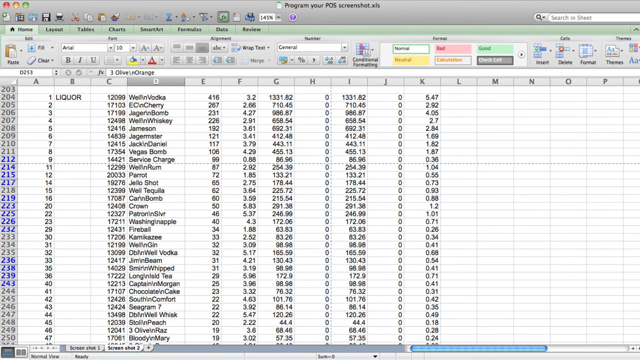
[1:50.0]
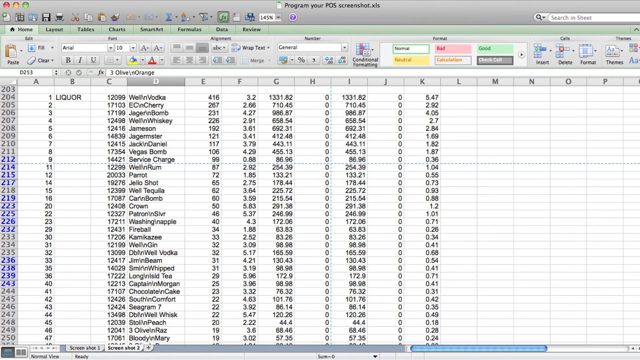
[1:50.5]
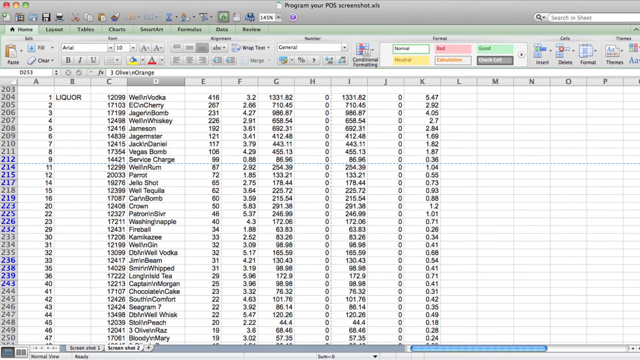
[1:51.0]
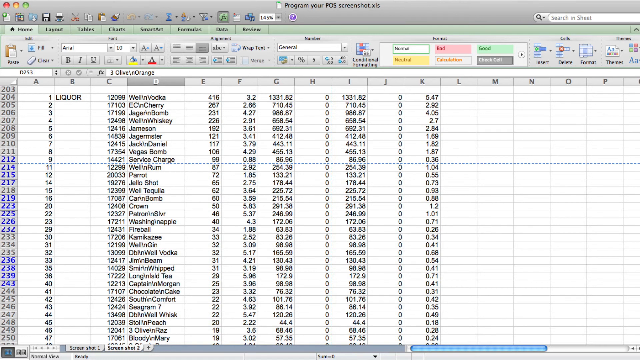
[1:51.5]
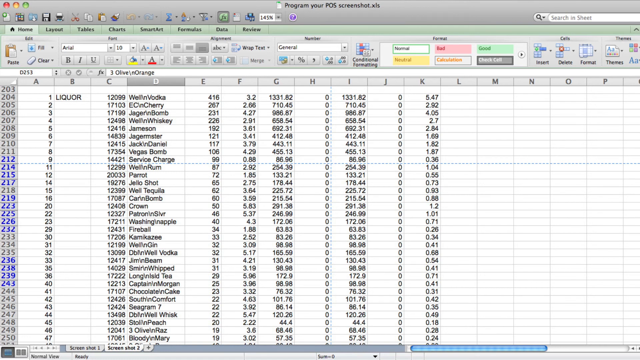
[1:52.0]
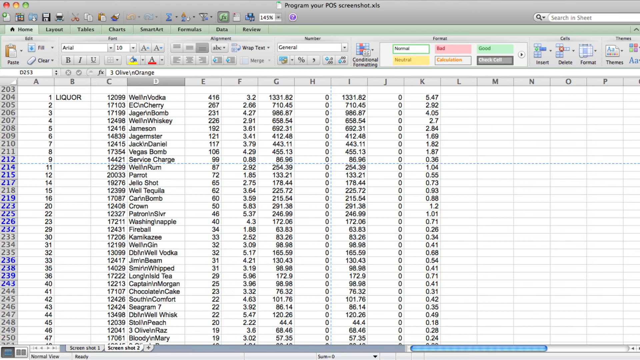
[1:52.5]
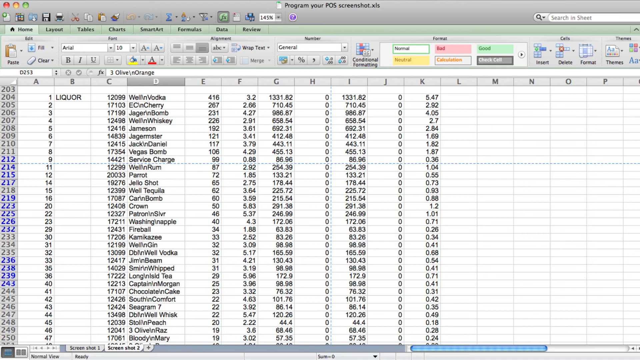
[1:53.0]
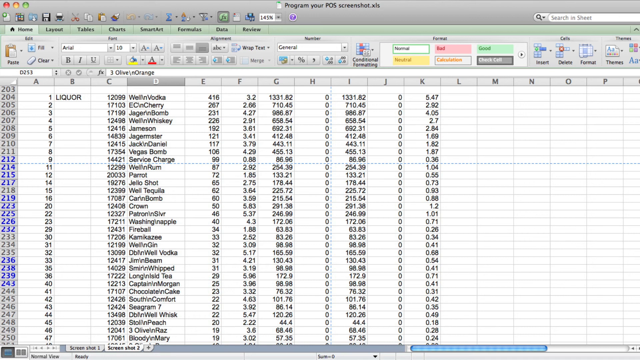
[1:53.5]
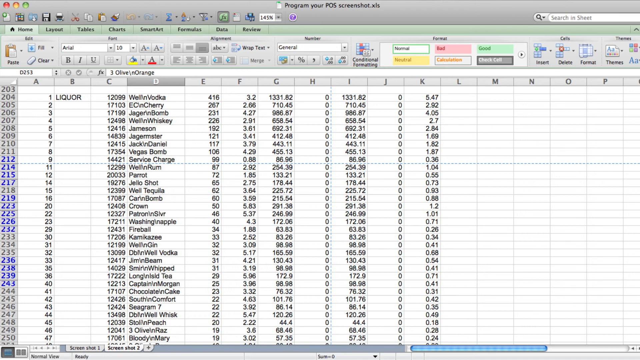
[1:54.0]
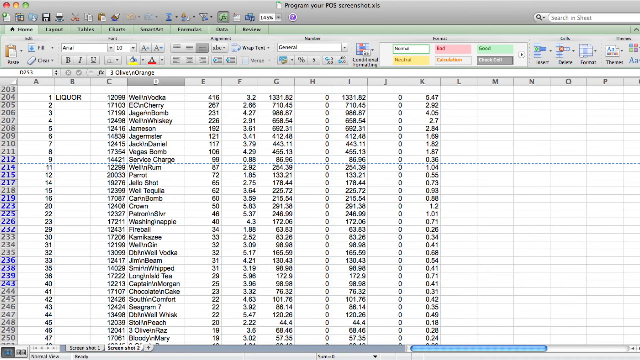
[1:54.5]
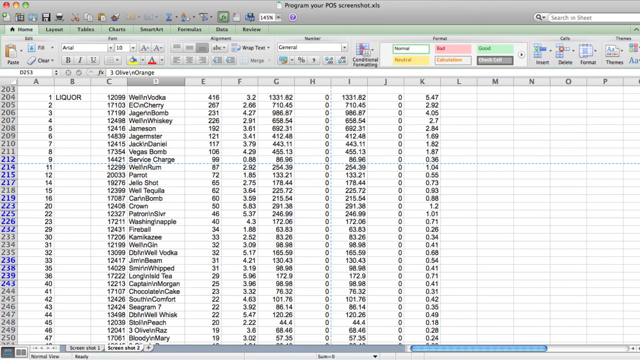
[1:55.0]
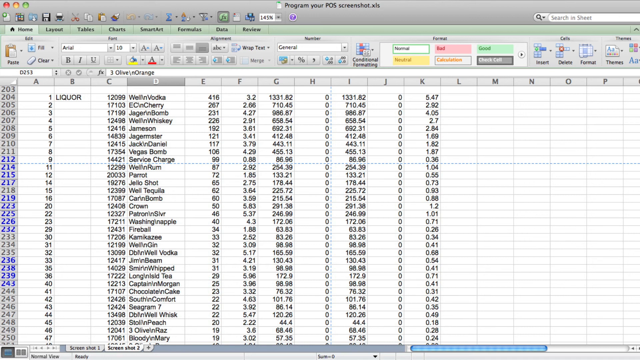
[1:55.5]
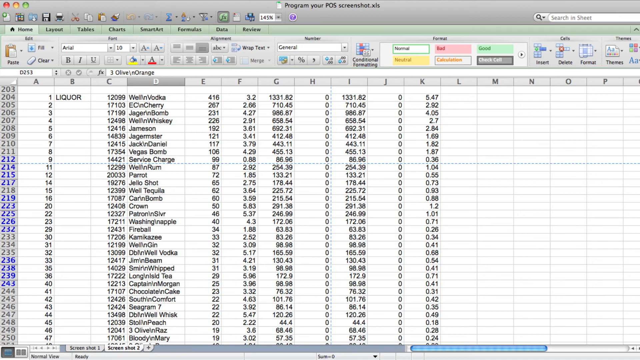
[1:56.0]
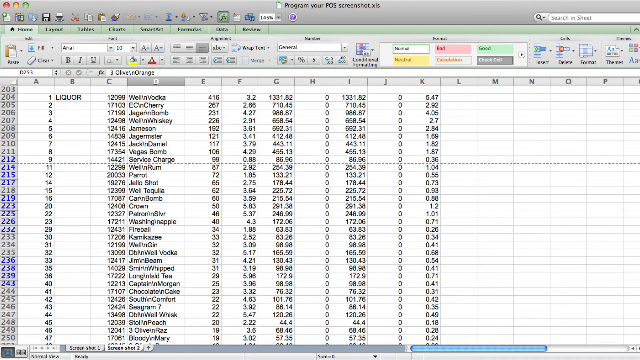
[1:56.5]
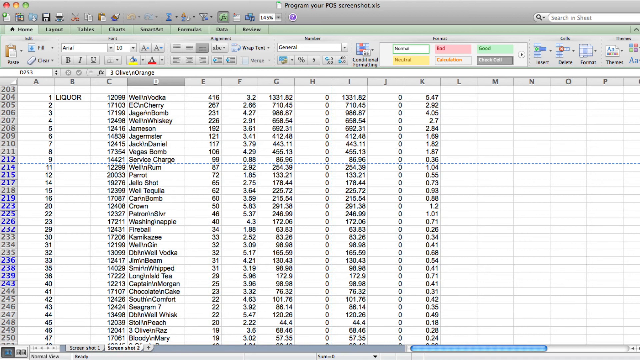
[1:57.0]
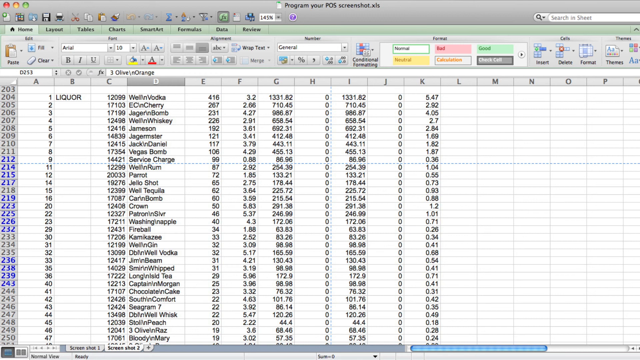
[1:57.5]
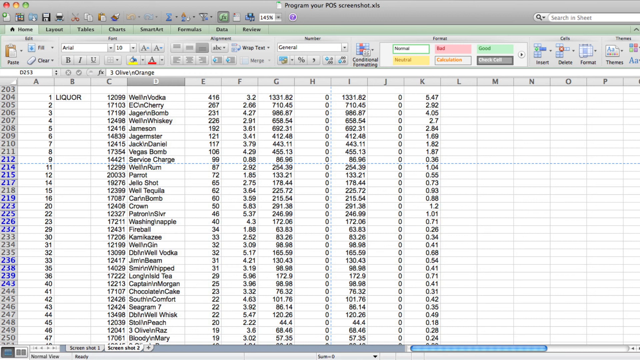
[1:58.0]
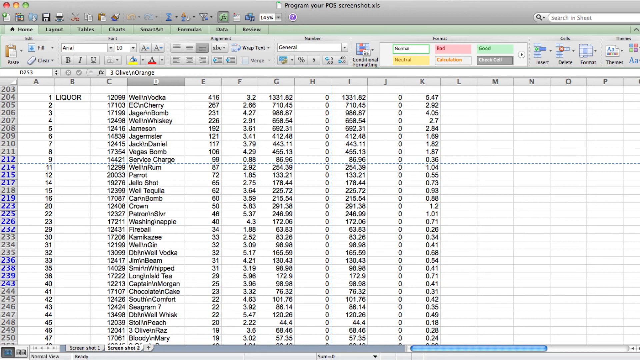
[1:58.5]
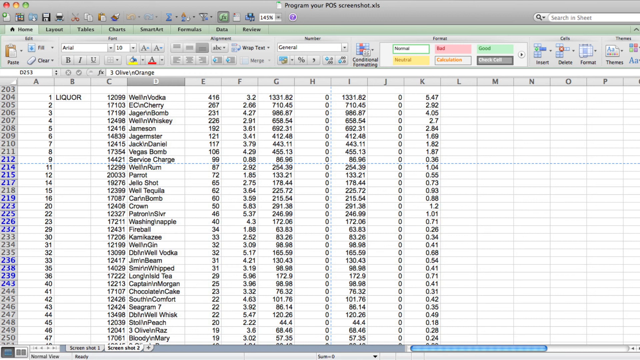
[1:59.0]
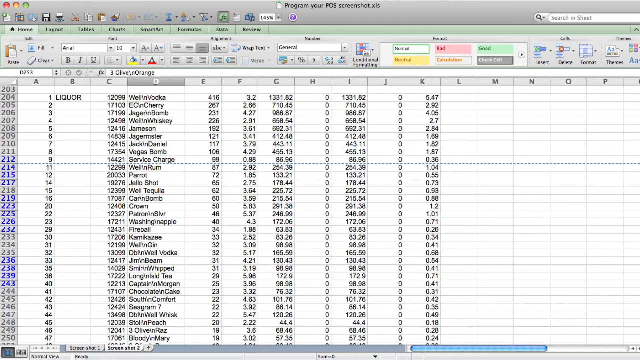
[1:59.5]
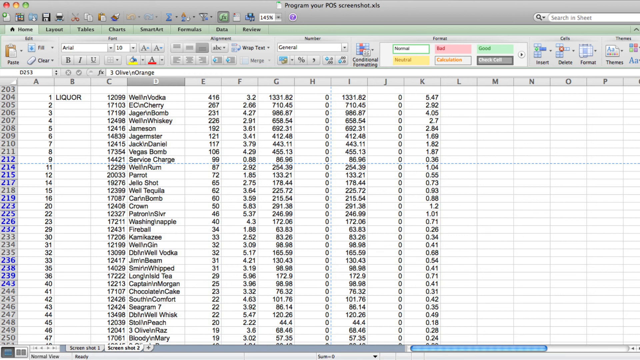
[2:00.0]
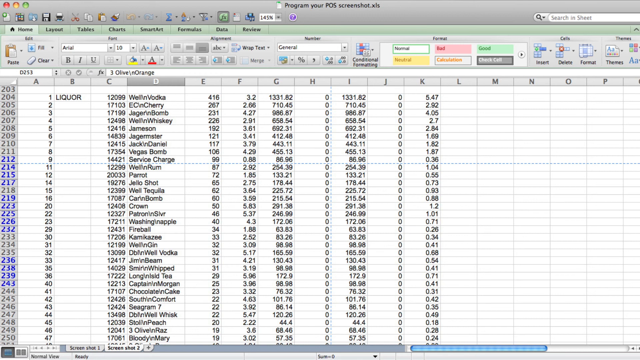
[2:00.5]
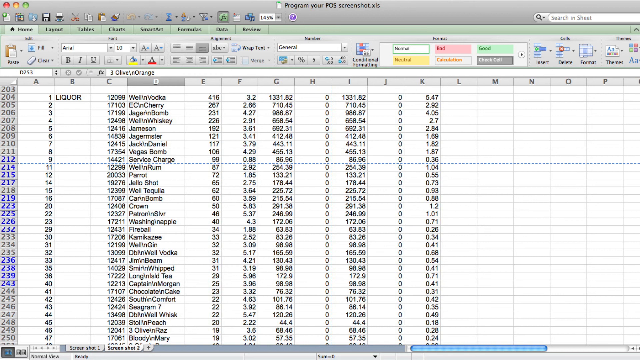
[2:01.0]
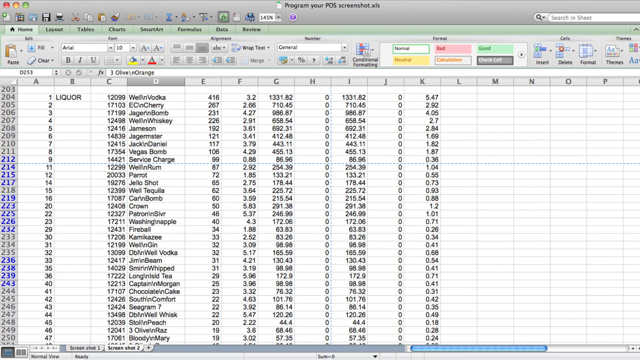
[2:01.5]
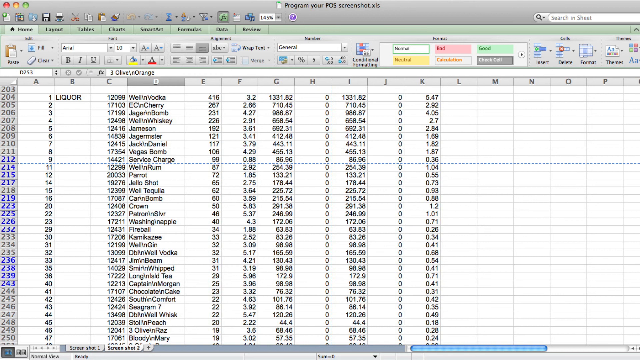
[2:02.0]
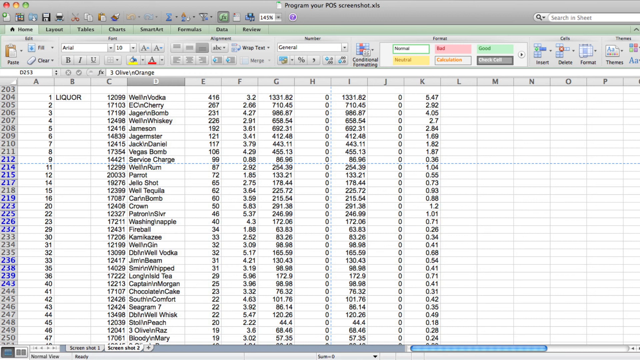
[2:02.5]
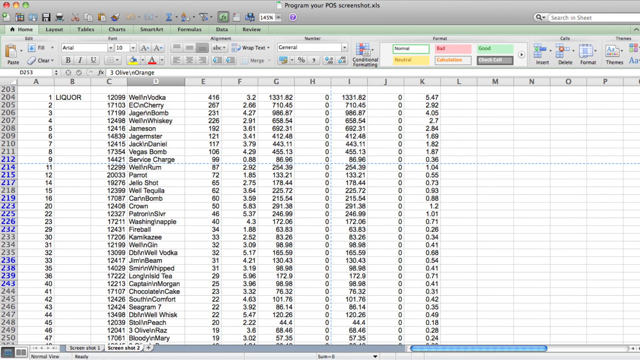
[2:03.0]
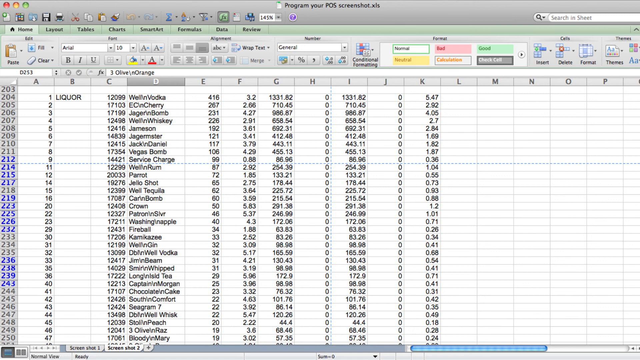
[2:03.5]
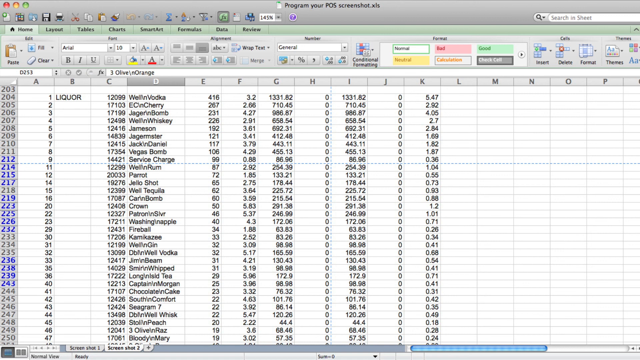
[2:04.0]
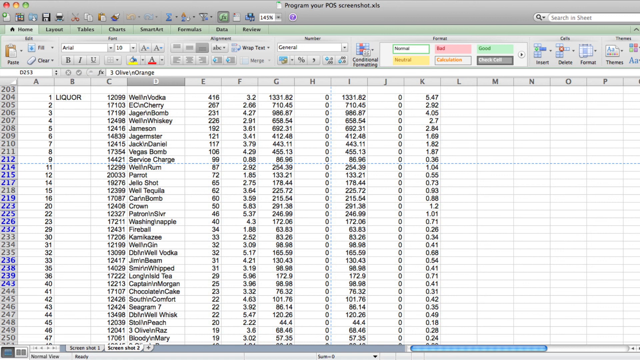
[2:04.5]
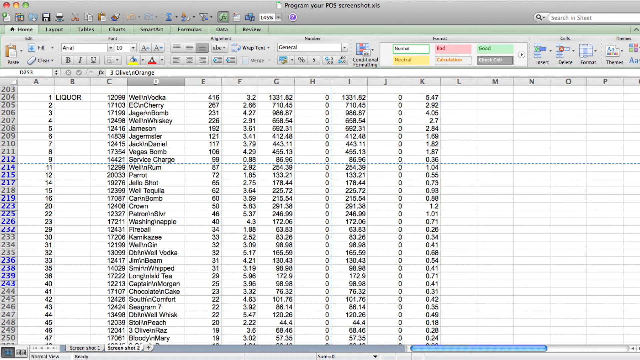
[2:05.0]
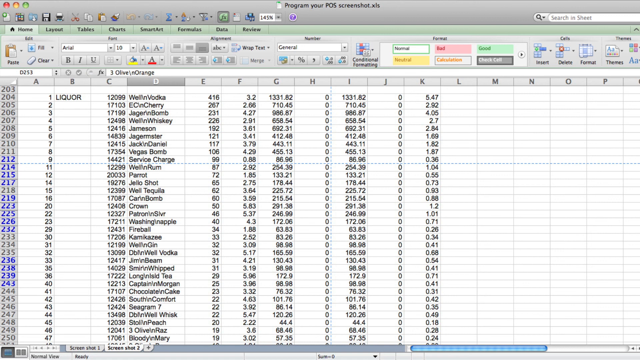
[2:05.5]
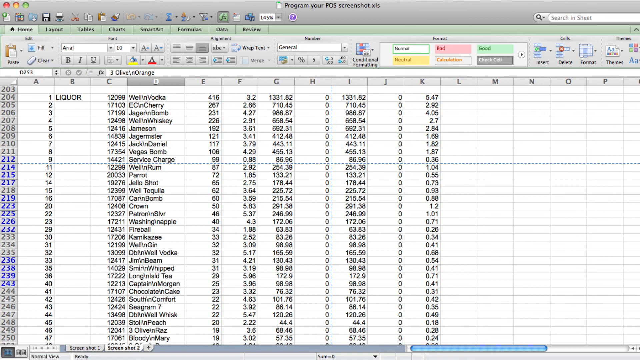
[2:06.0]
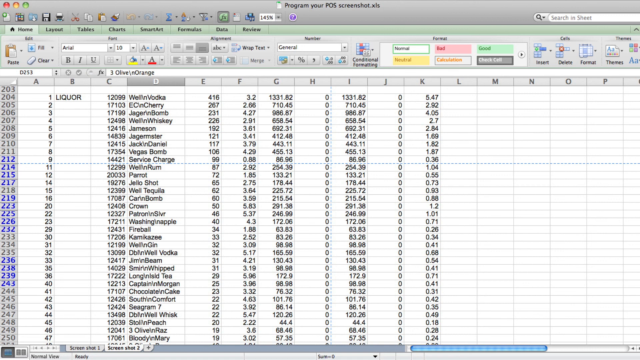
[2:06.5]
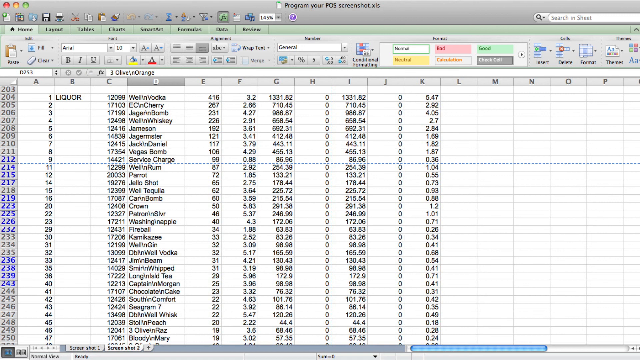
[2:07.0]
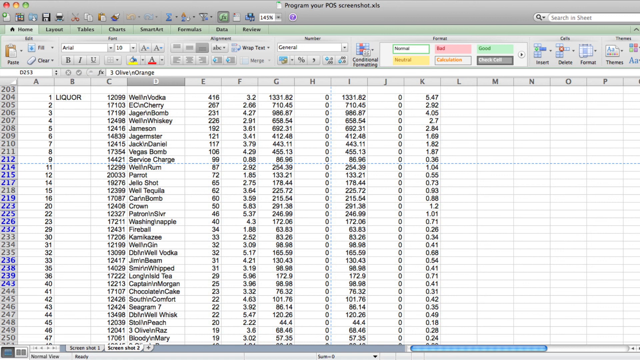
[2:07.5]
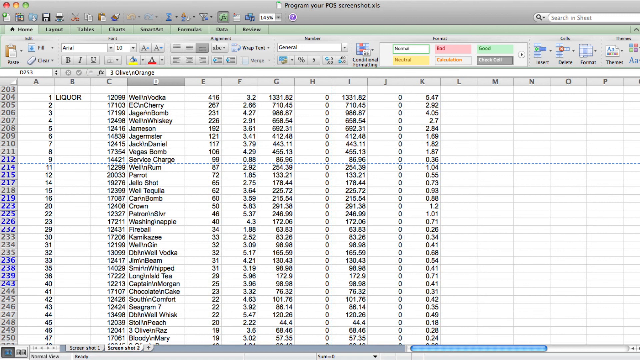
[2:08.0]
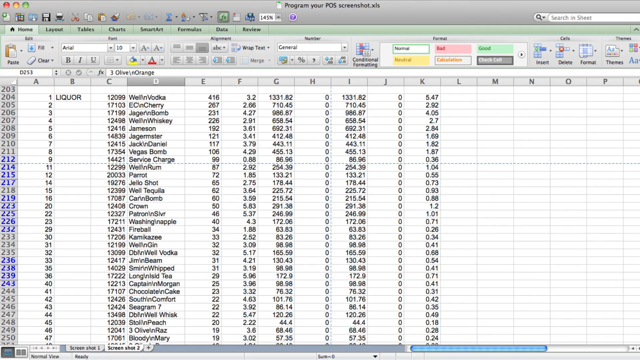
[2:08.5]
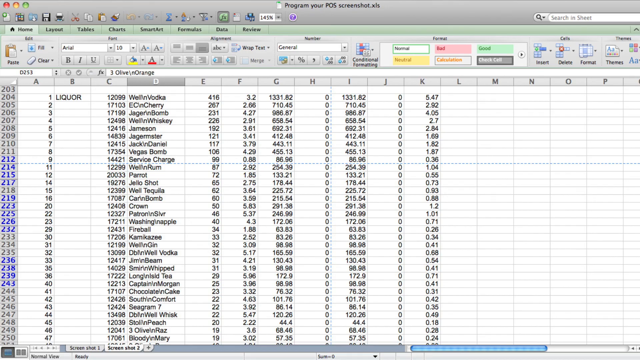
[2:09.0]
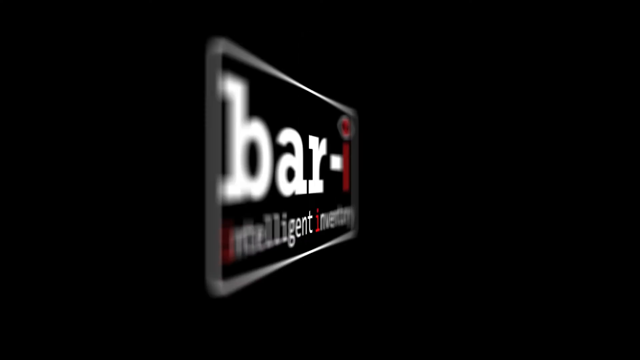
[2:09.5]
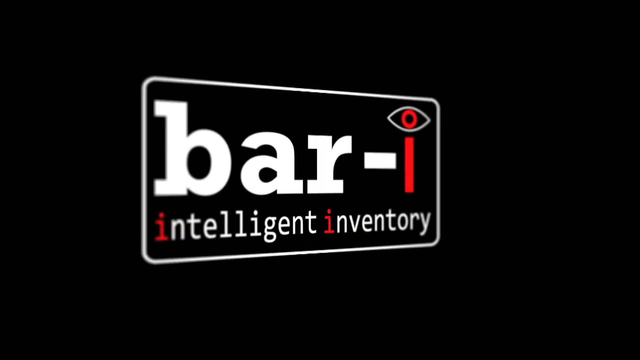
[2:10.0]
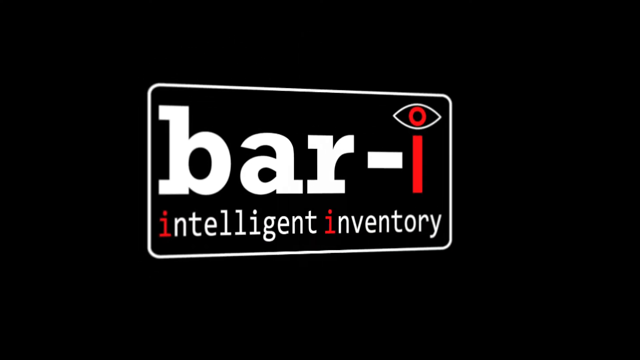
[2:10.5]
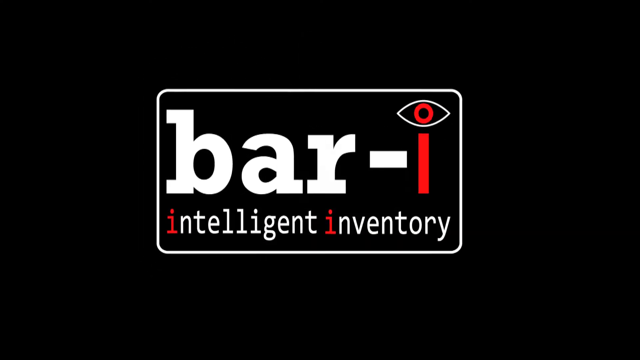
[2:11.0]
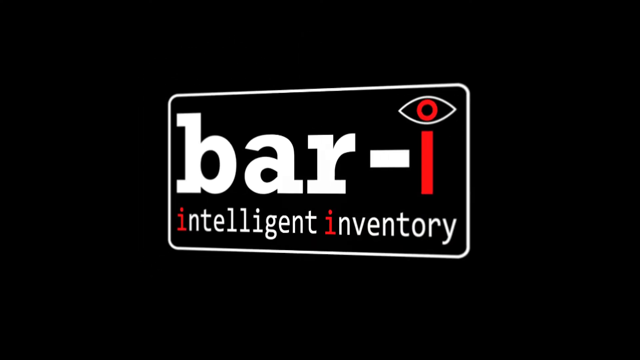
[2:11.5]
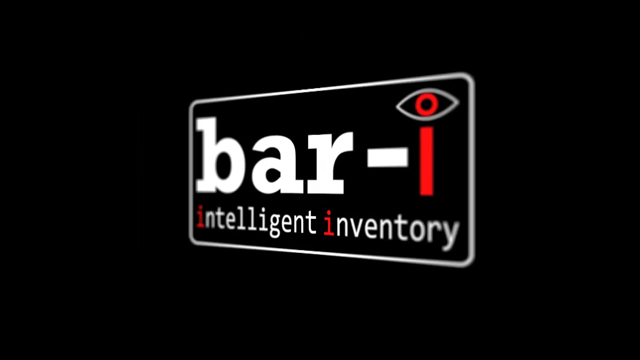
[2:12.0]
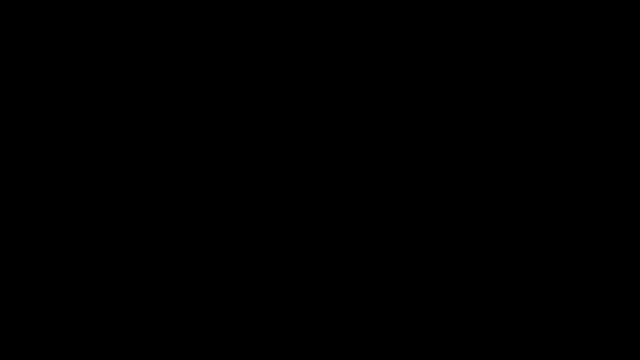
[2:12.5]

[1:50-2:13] The point-of-sale screenshot shows the liquors sold, the quantity sold, the prices and the profit percentage of each liquor. The screen then transitions to a final text screen for the company bar-I Intelligent Inventory. Its logo is inside a text box with a white border and reads "bar-I": "bar" is in very large block letters, the dash is white, and the I is red, with the point of the I surrounded by the symbol of a human eye. "intelligent inventory" is in smaller text below the company name as the tagline, and the first letter I of each word is red.